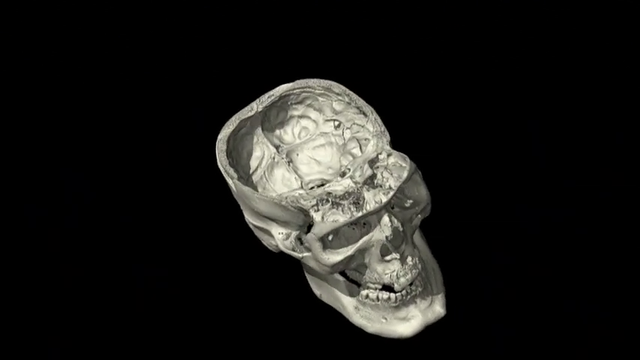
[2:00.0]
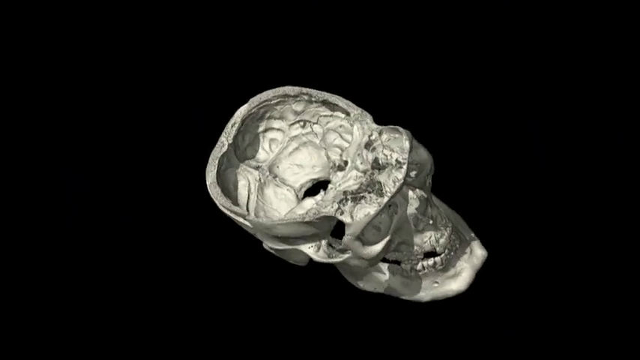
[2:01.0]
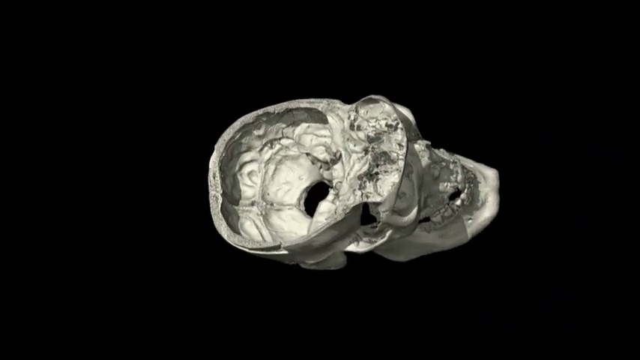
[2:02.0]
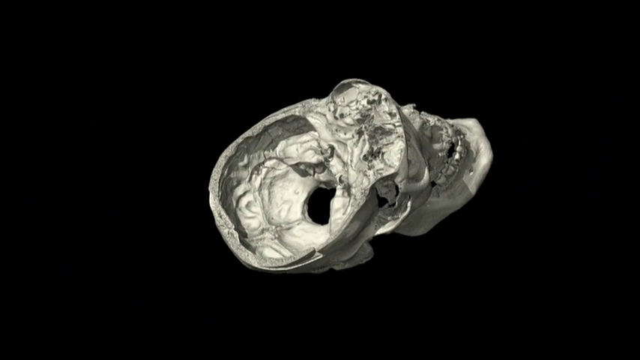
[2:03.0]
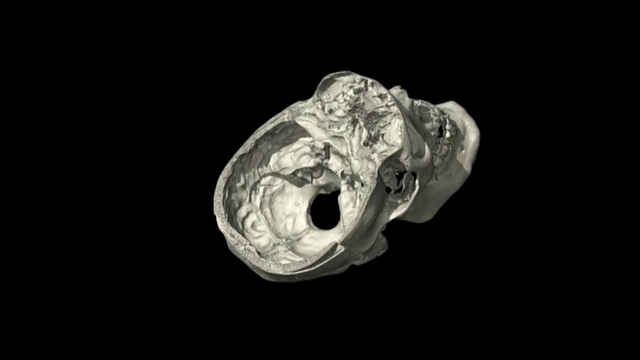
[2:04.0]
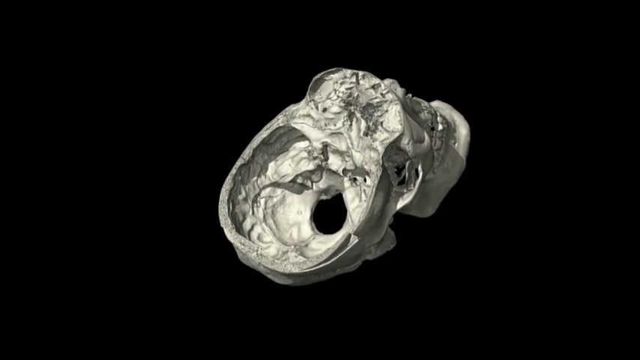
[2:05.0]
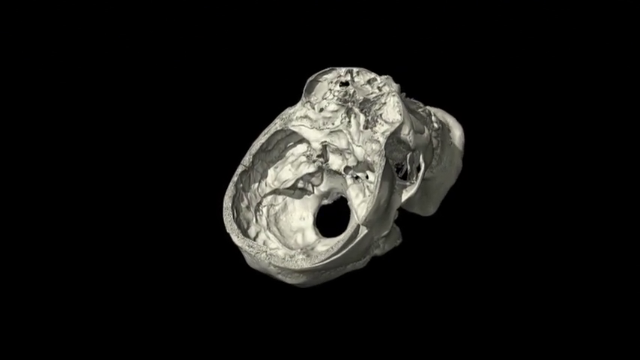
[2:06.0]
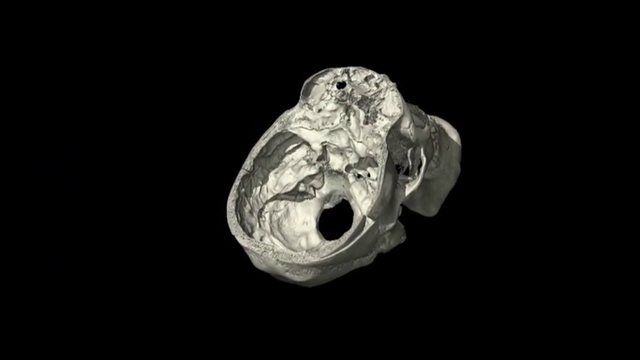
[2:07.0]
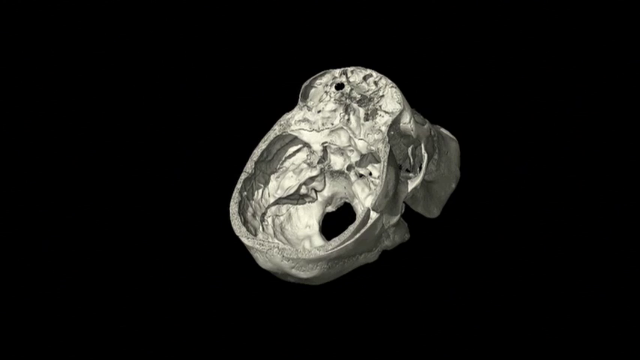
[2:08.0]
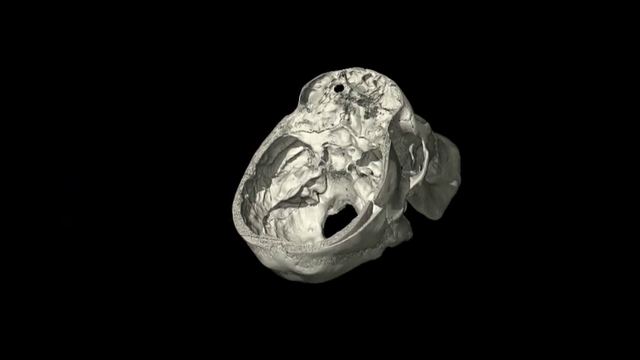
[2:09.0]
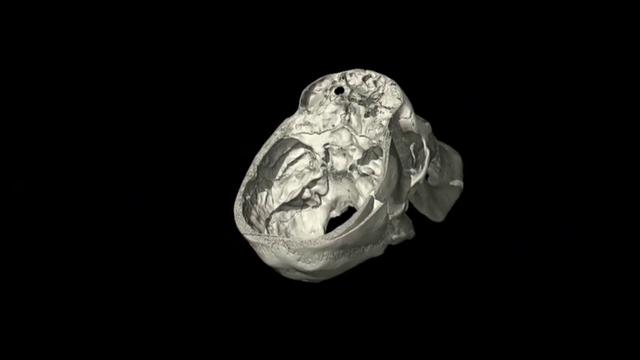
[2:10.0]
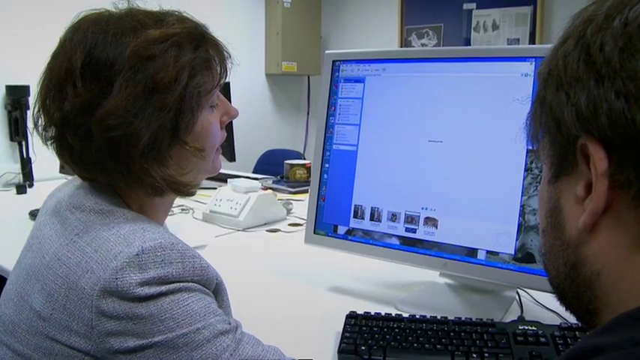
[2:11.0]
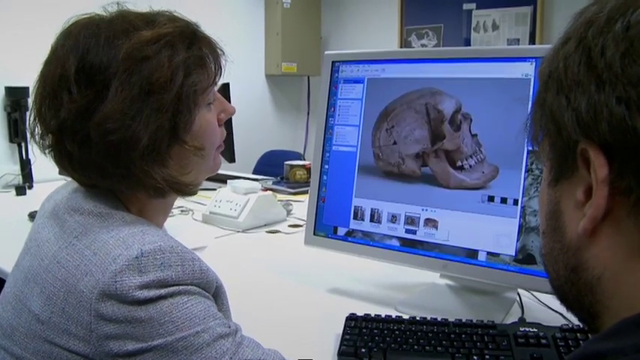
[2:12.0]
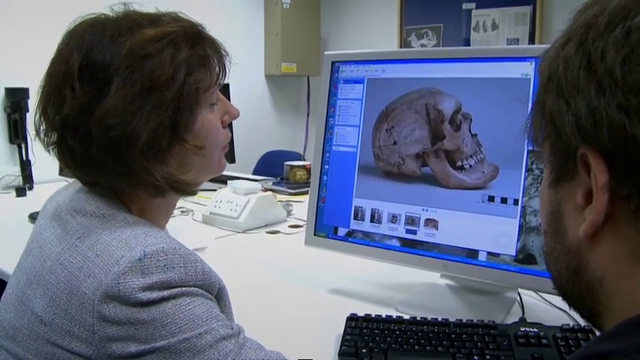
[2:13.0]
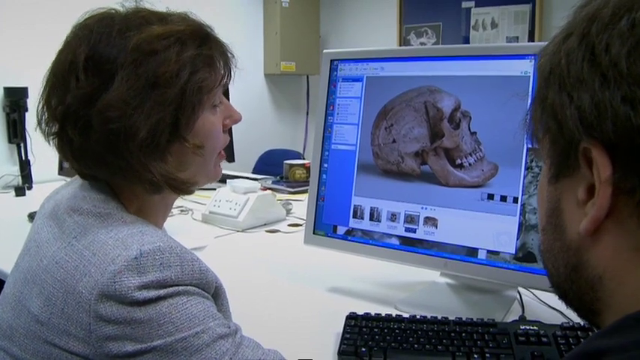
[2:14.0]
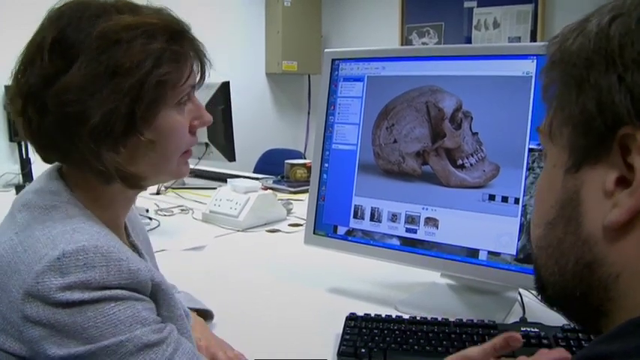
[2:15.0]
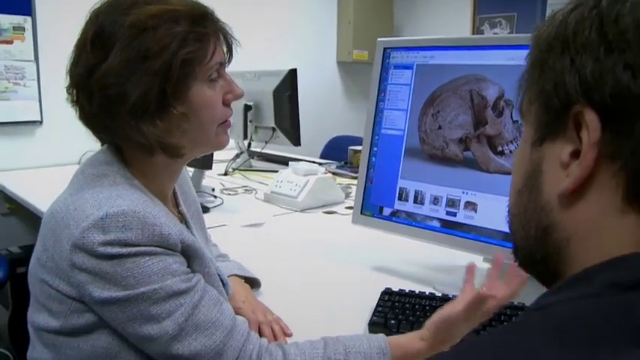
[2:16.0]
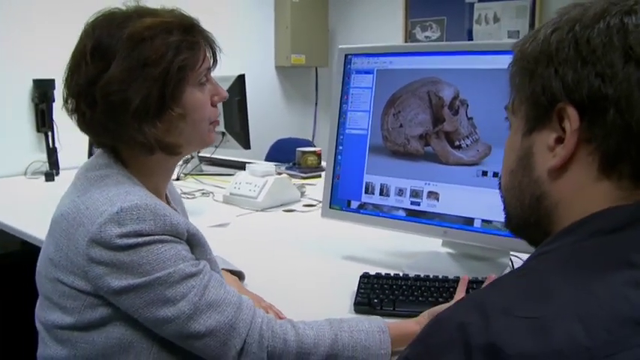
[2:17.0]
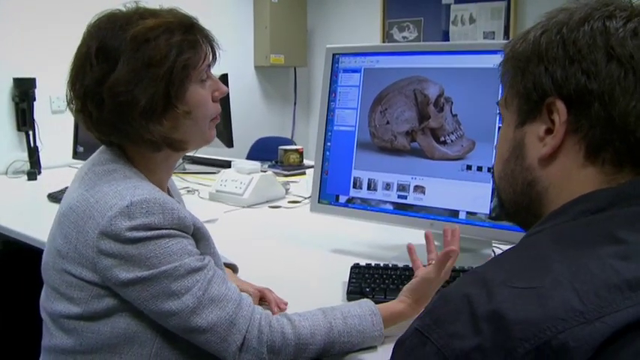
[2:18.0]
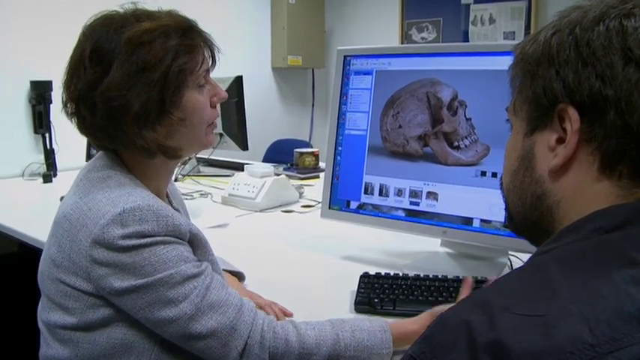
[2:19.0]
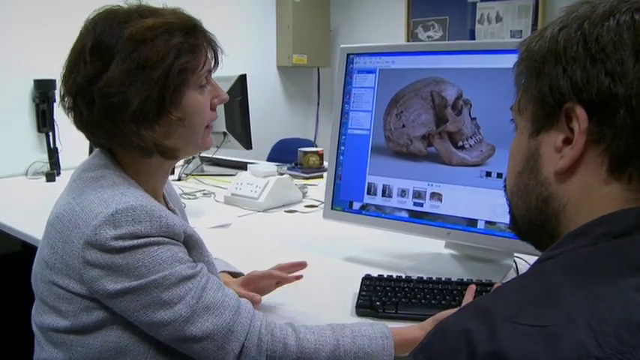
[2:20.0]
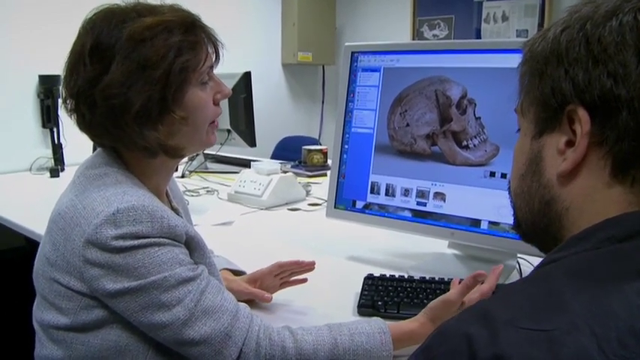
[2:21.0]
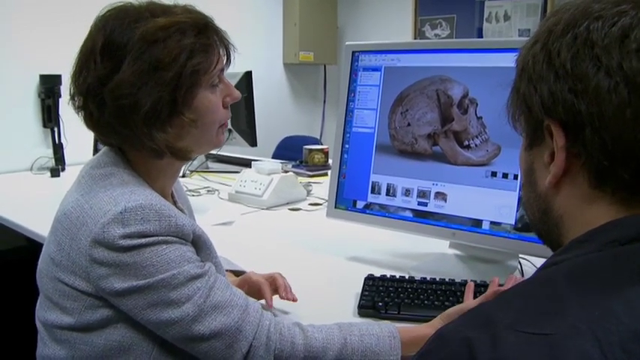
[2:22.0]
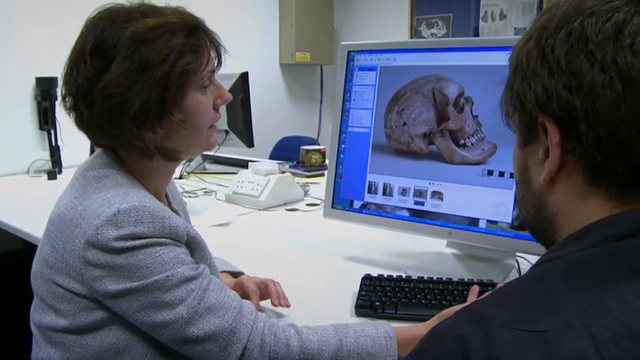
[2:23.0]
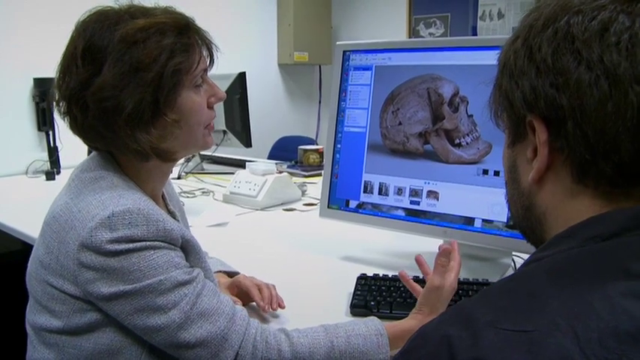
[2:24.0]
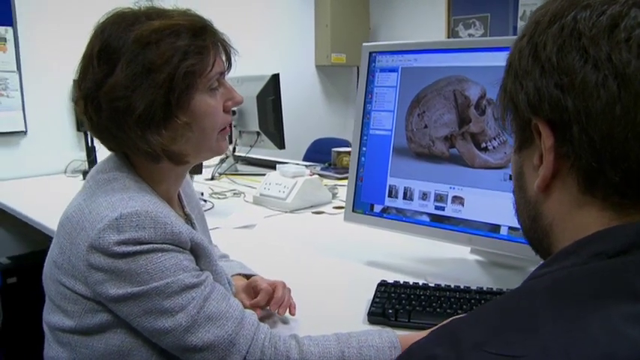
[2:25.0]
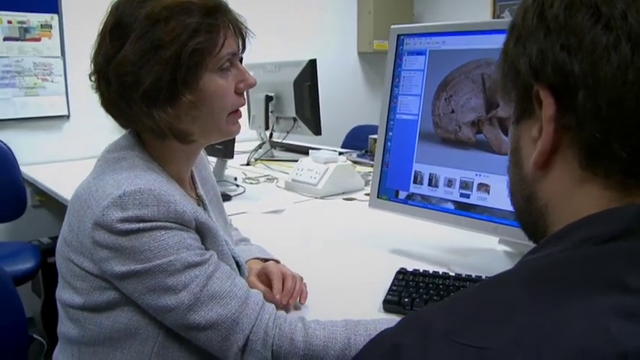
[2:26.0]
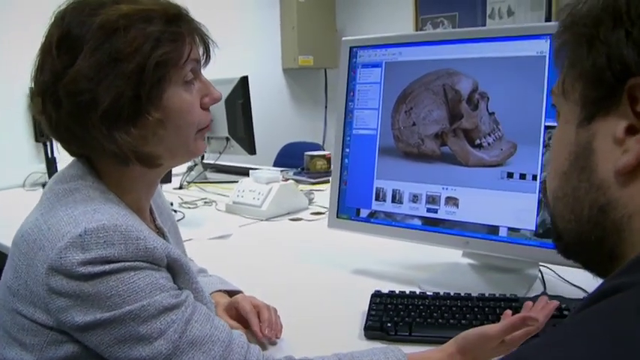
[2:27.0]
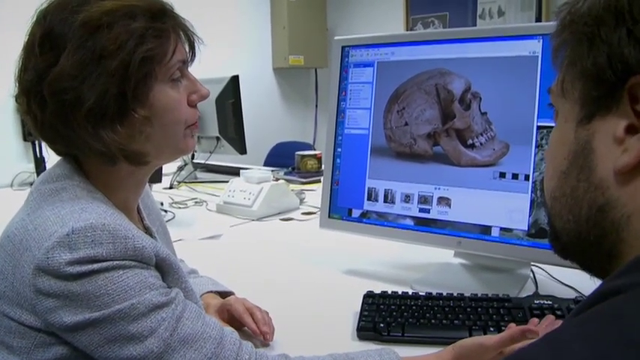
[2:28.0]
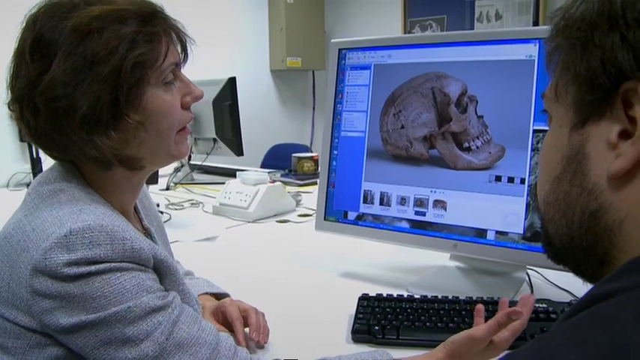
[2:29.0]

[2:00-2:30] The white 3D digital skull continues to rotate counterclockwise, giving a side view as it moves. It then kind of tilts to the side, giving the view seen in most of the video. A back view then shows the two people looking at the computer screen, which displays an image that appears to be the side of the skull laying on a table. The woman starts to talk about it, using her hands to explain rather than pointing at the screen. As she looks at the screen, the man looks at her while she talks about the image of the skull.